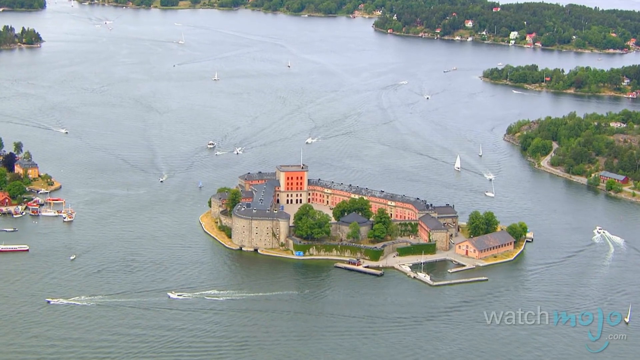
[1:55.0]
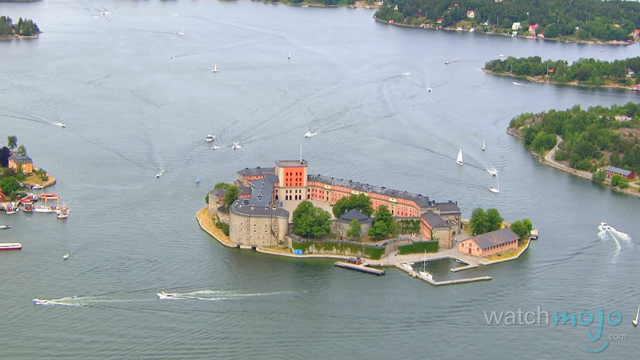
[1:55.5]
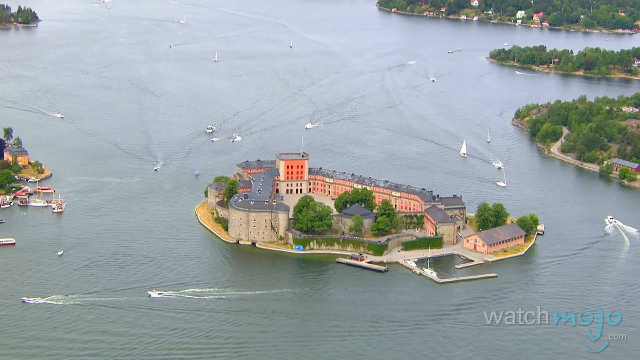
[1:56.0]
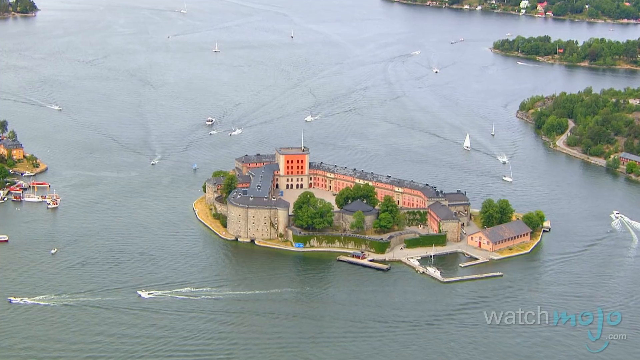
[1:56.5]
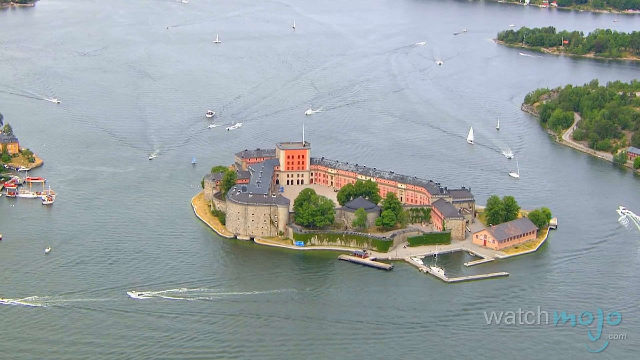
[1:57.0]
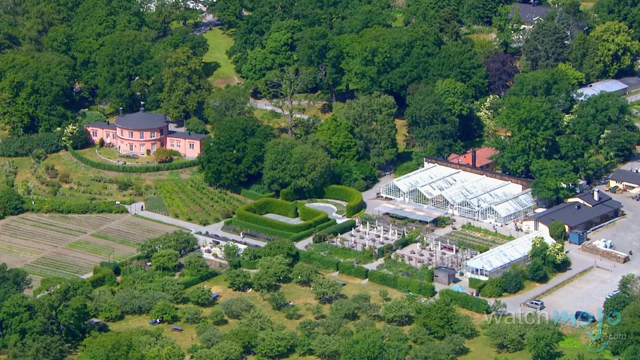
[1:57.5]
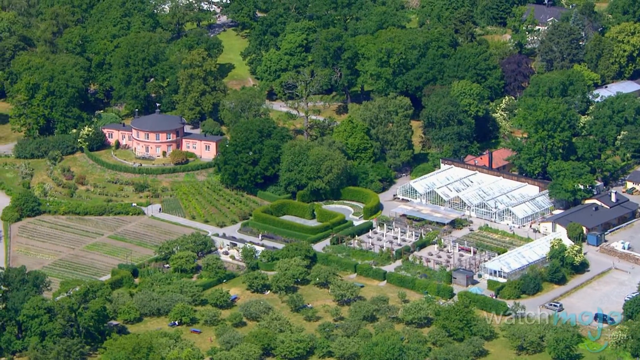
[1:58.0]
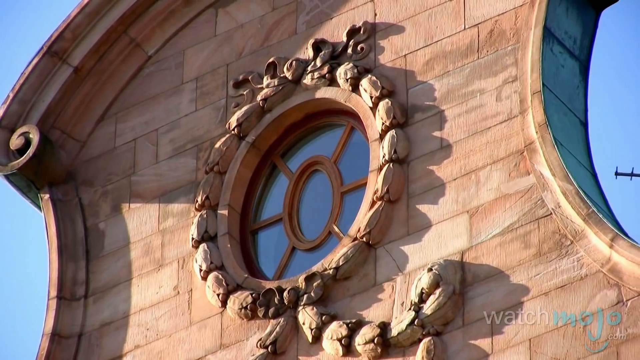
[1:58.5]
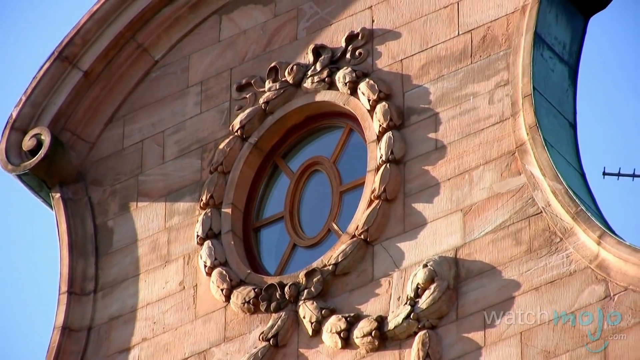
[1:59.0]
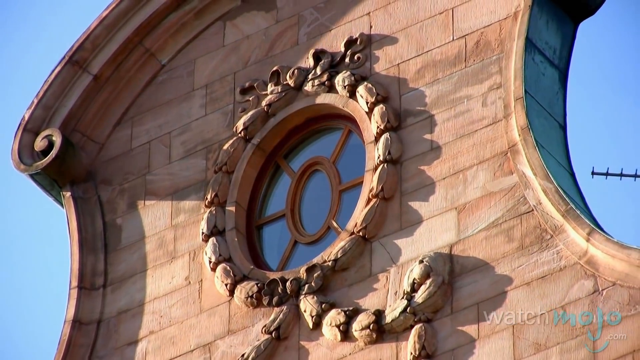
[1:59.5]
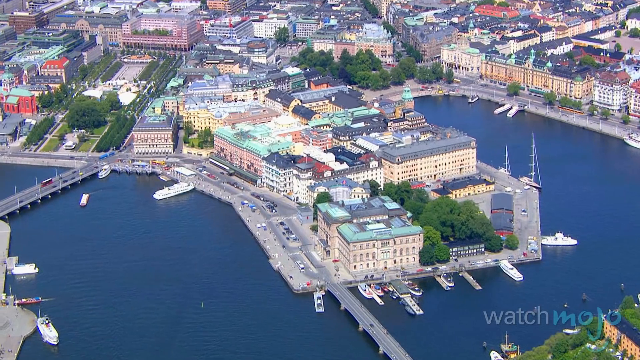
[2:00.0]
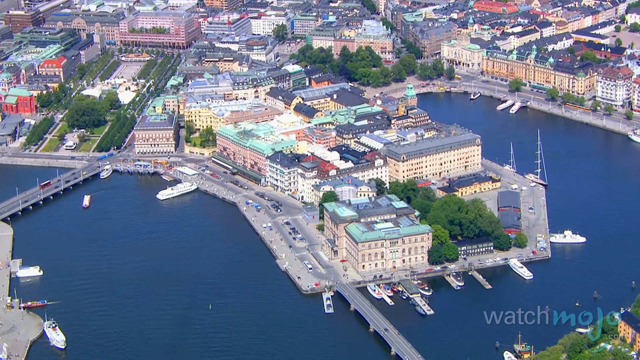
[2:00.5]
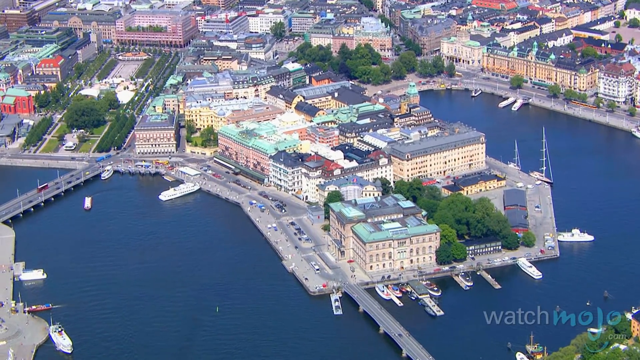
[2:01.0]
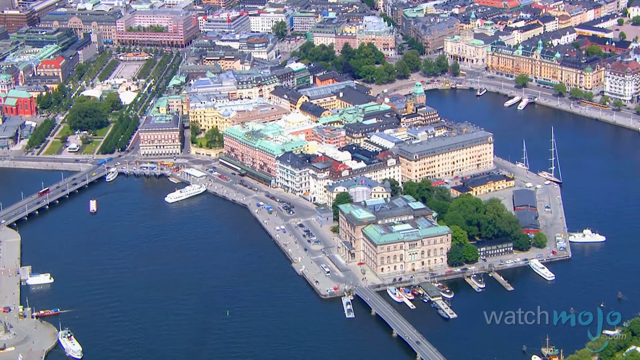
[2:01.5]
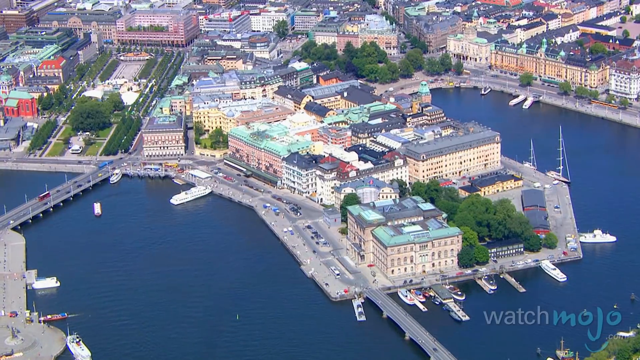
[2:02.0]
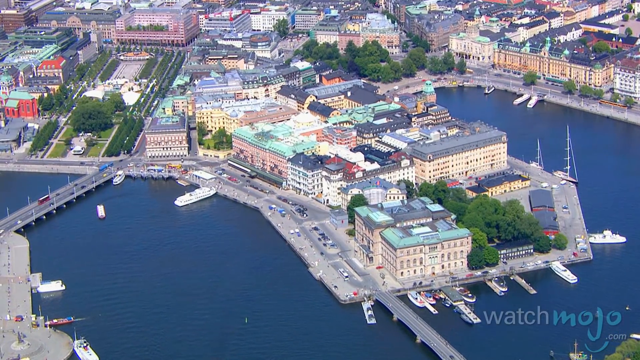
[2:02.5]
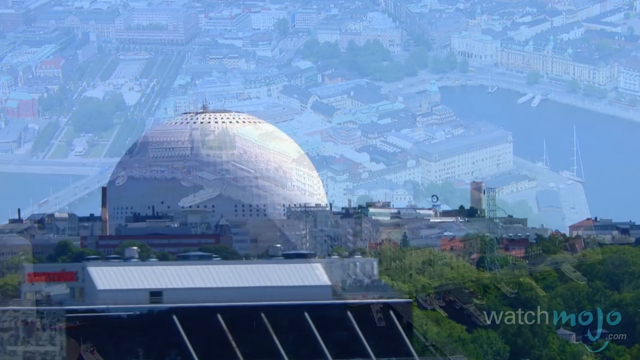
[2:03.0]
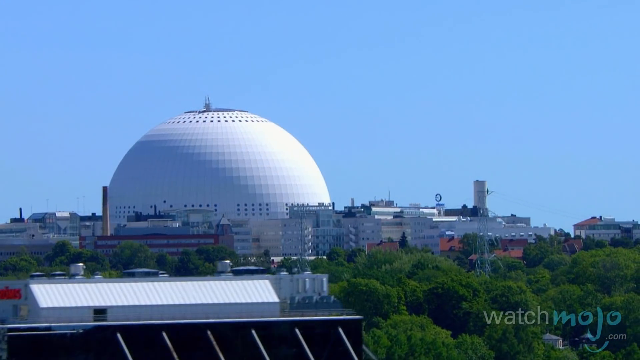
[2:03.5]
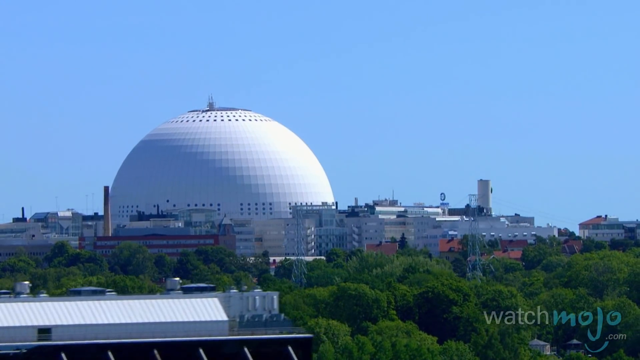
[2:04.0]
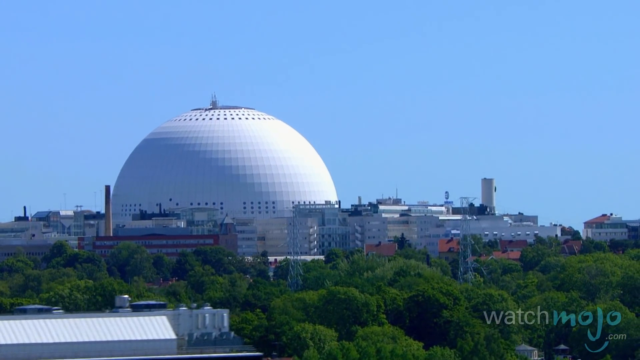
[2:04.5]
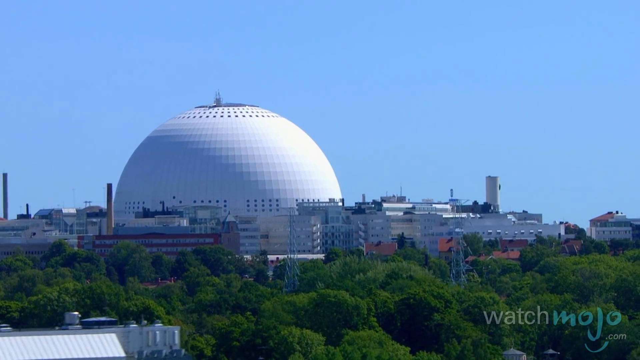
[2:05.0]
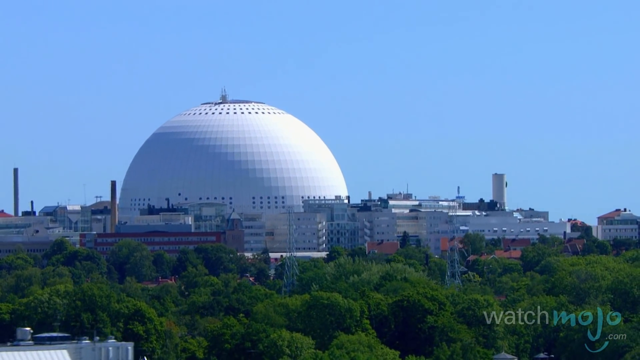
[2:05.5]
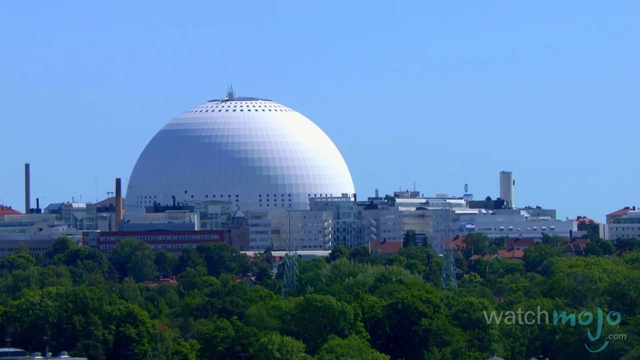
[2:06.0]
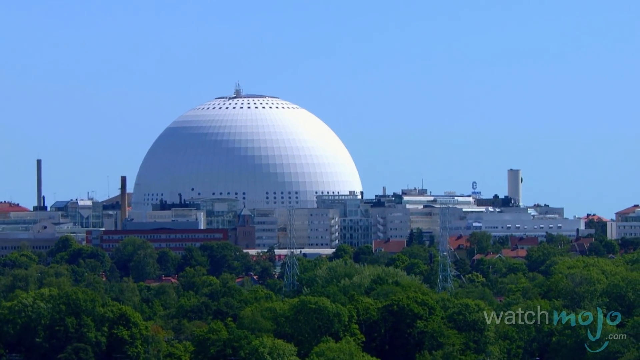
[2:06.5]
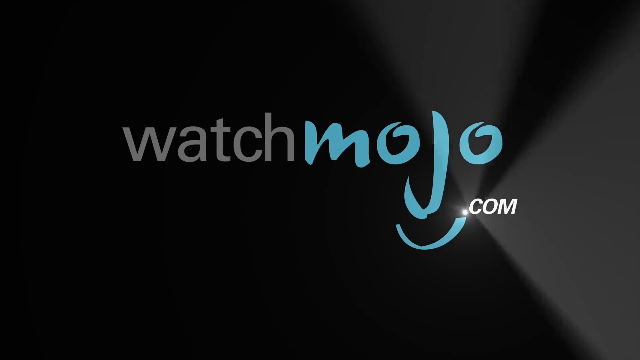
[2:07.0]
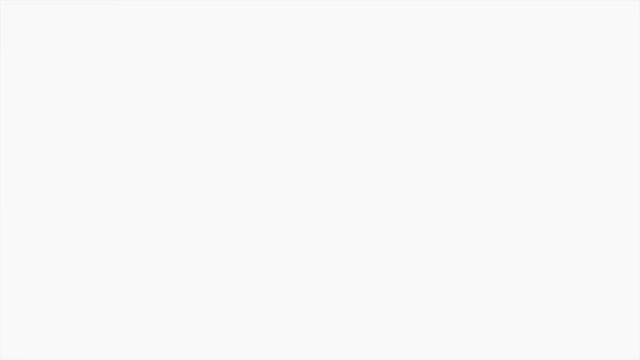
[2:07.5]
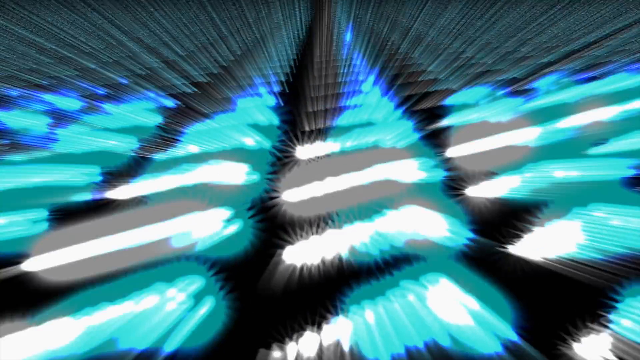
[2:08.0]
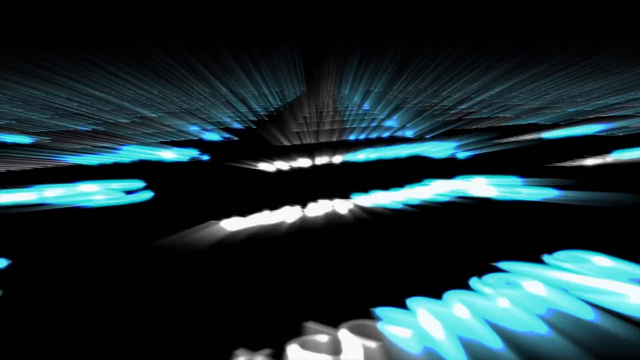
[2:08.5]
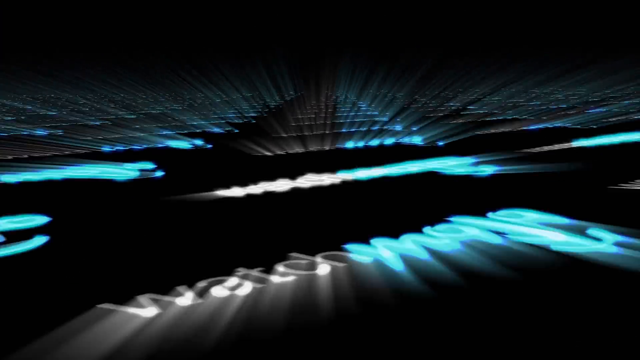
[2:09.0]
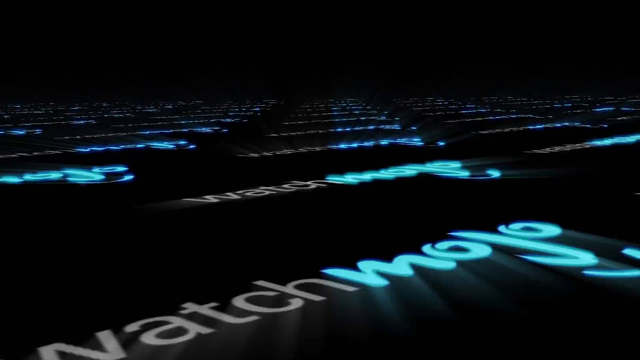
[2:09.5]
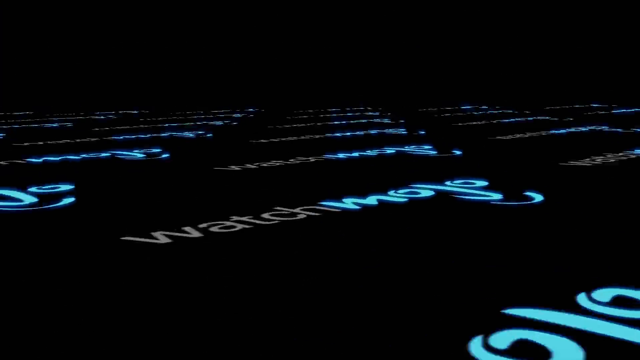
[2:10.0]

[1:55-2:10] A small island has several buildings, possibly a compound or some type of school; no road is visible, so it appears to be accessible only by boat. A close-up shows one of the inlets where the land juts out into the water like a peninsula, with buildings built all the way up to the water. Other aerial views follow, including a closer view of the dome, which is not a mosque-type dome; it is unclear what it is, maybe an arena, possibly a soccer arena. It rises high above all the other buildings around it, with nothing close to its height, and stands out across the horizon. There is also a castle-looking pink house out on its own, with a round-type structure, an elongated bottom of maybe two levels, and a circular middle. The video ends with the WatchMojo.com logo scrolling across the screen.